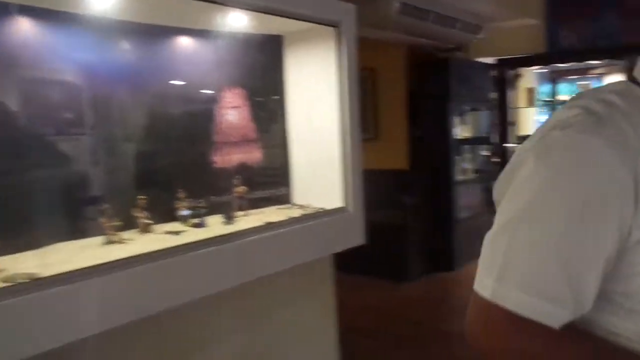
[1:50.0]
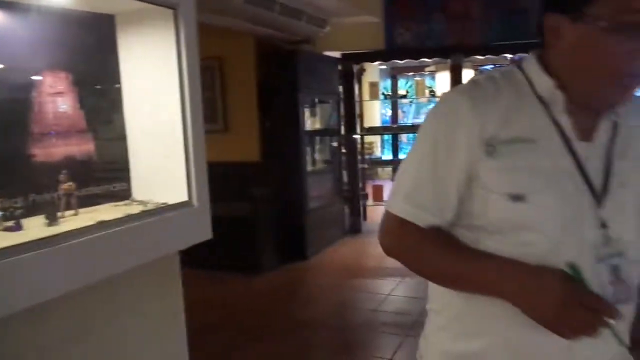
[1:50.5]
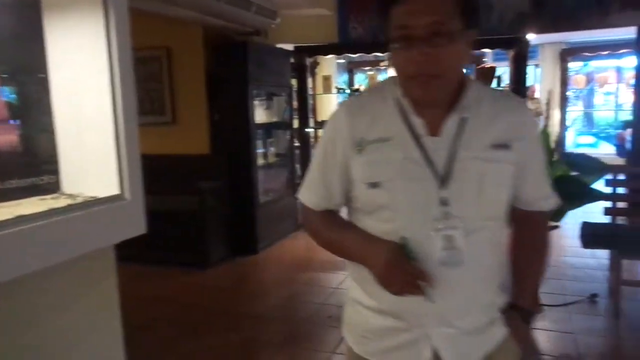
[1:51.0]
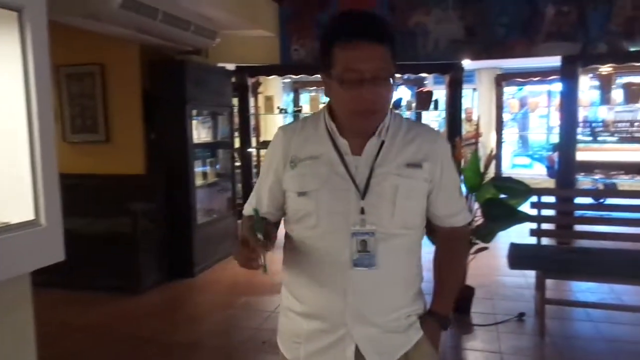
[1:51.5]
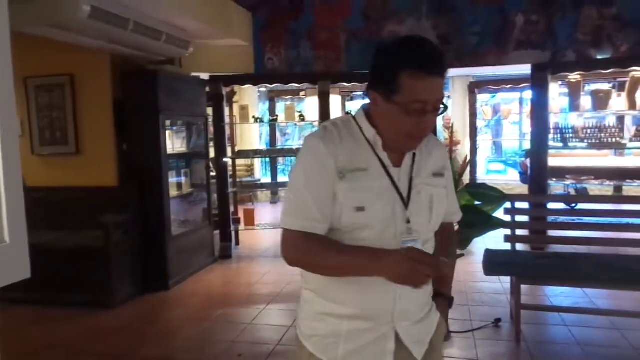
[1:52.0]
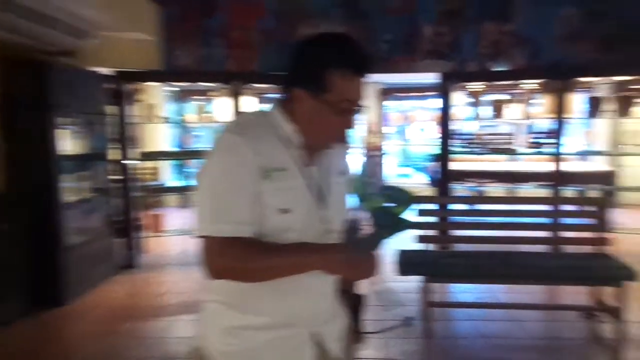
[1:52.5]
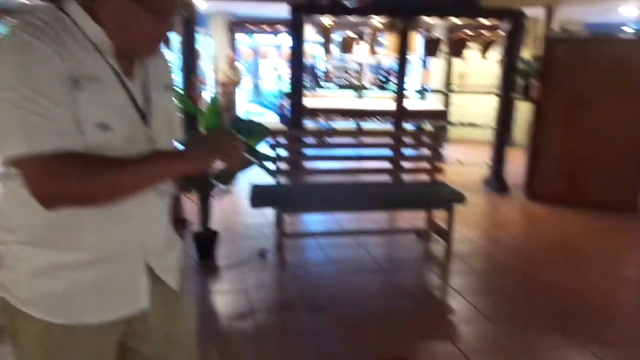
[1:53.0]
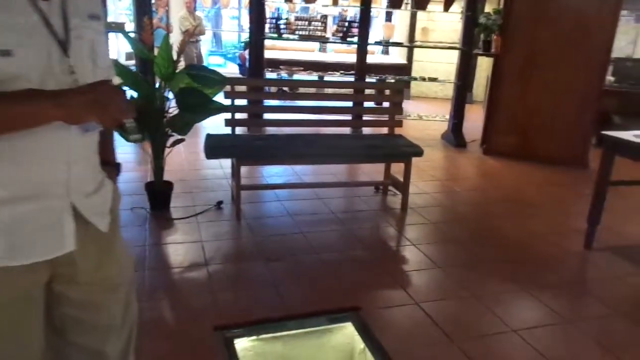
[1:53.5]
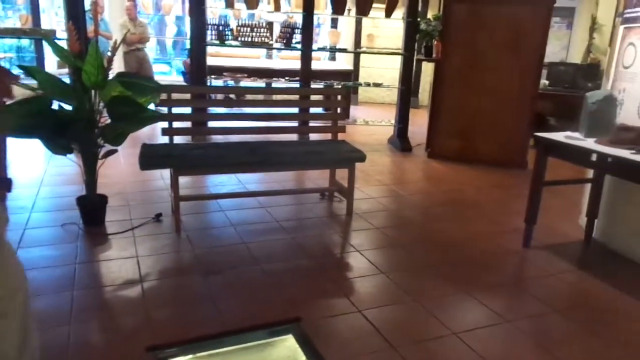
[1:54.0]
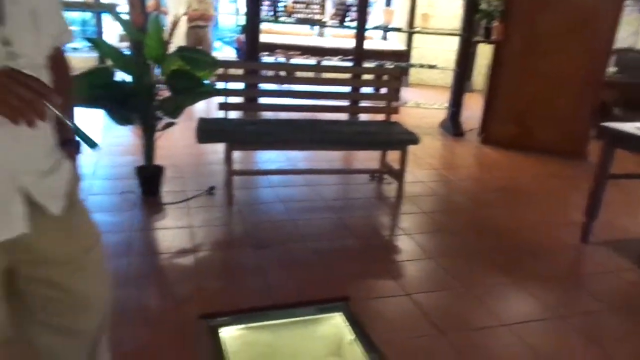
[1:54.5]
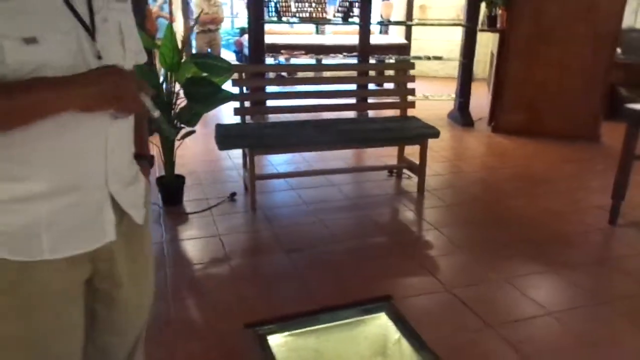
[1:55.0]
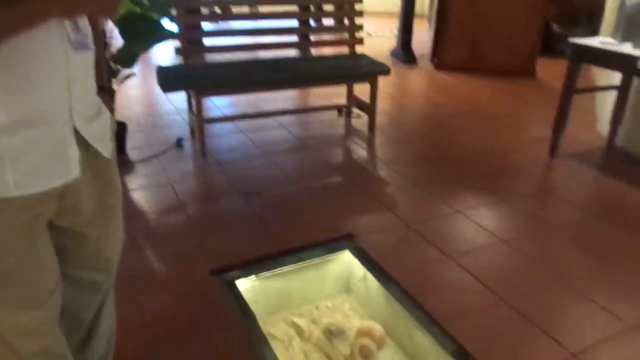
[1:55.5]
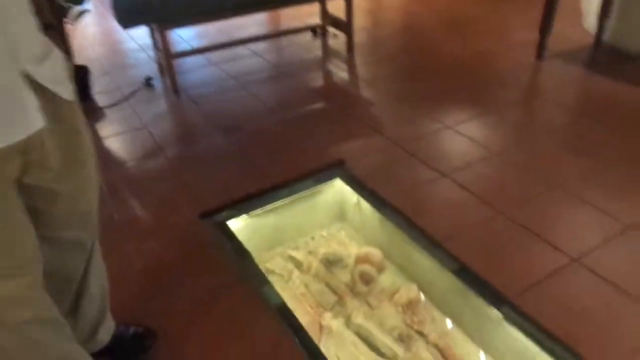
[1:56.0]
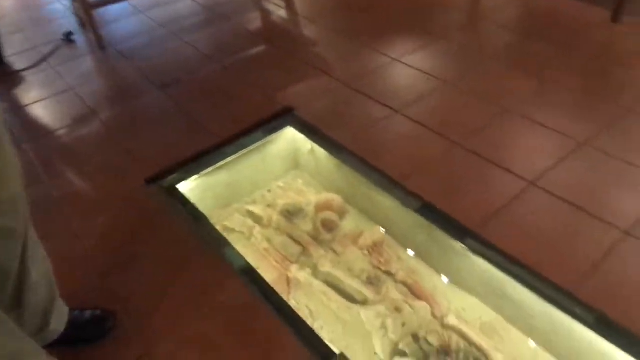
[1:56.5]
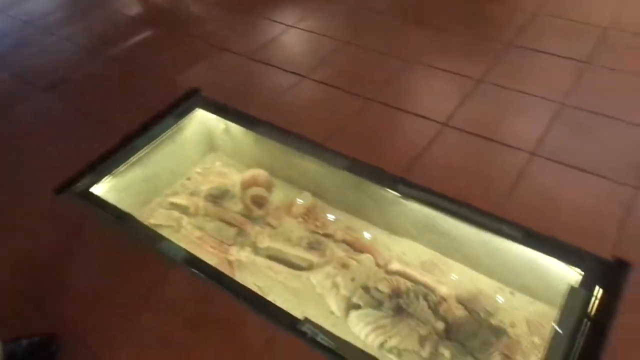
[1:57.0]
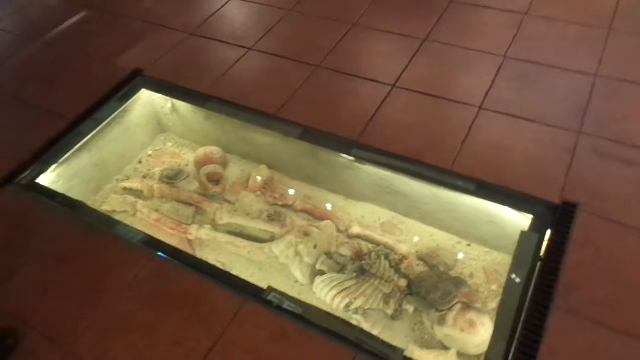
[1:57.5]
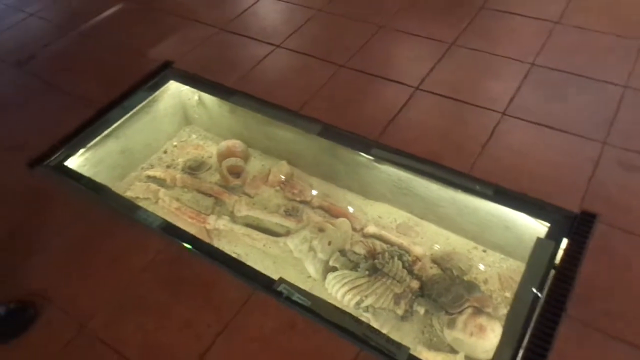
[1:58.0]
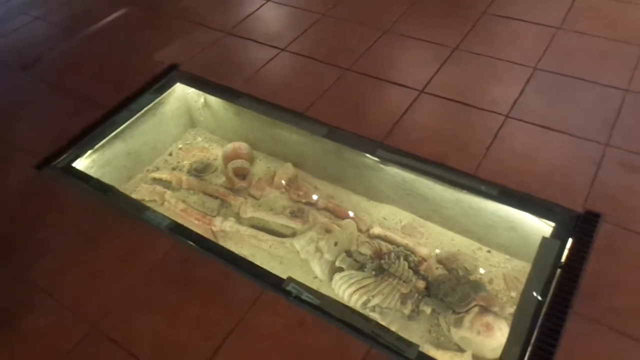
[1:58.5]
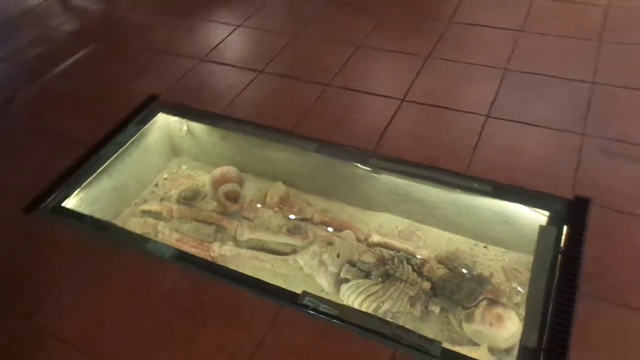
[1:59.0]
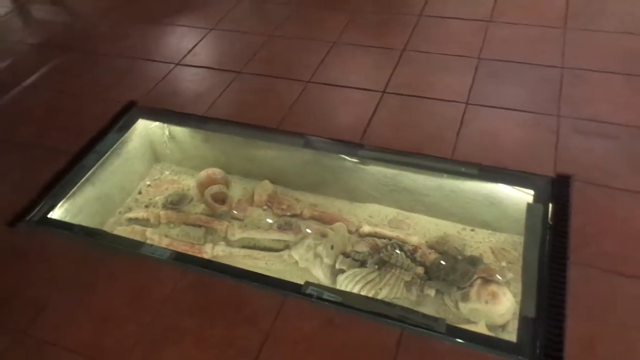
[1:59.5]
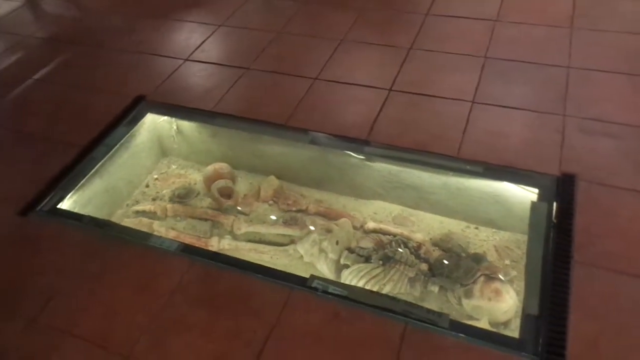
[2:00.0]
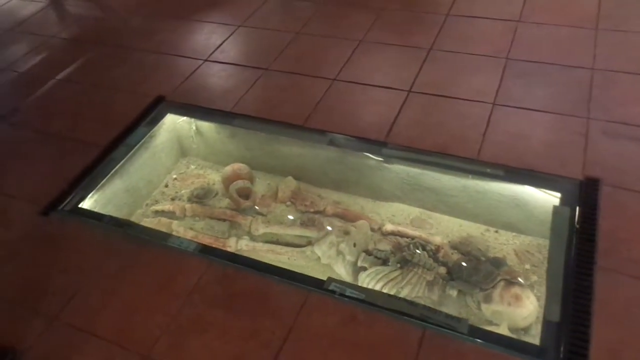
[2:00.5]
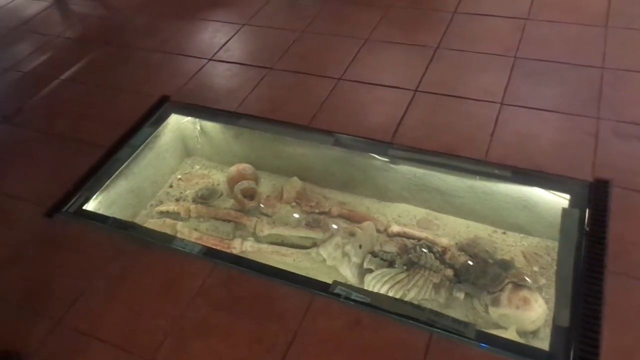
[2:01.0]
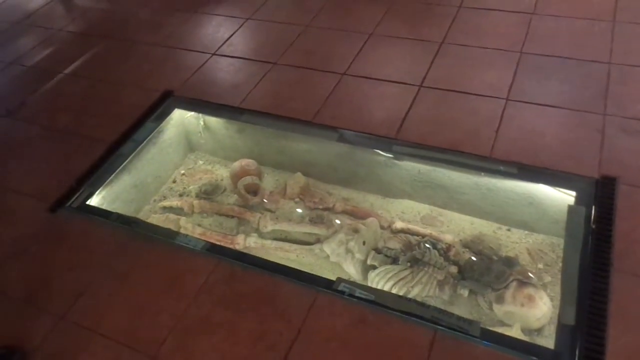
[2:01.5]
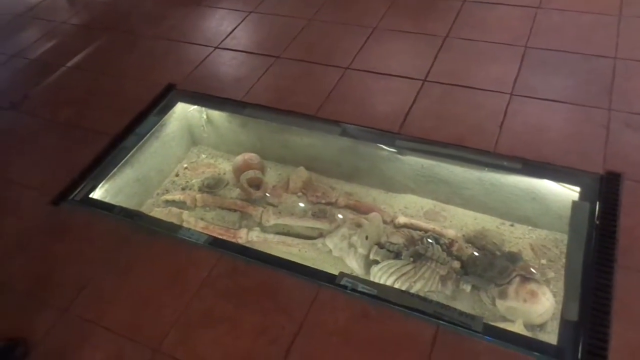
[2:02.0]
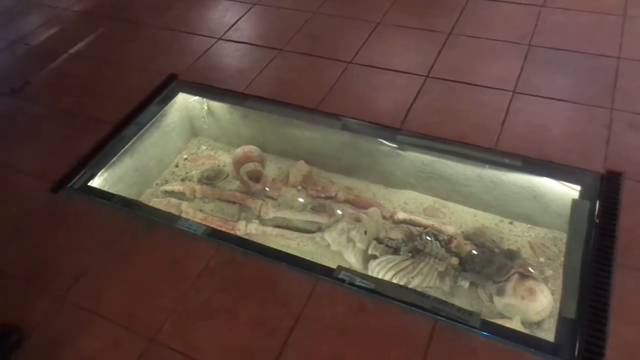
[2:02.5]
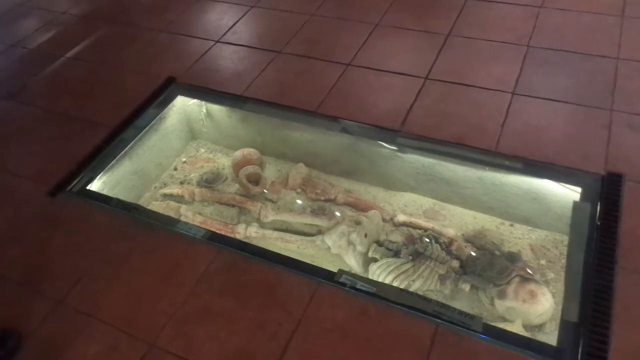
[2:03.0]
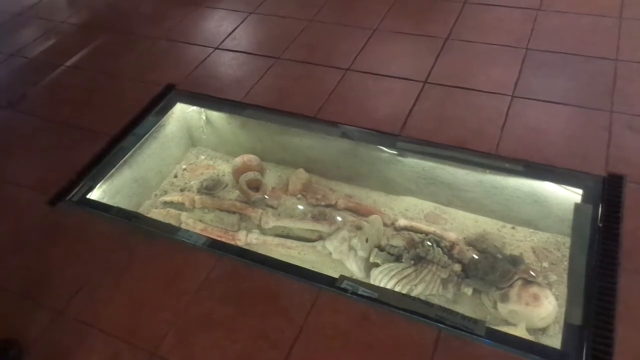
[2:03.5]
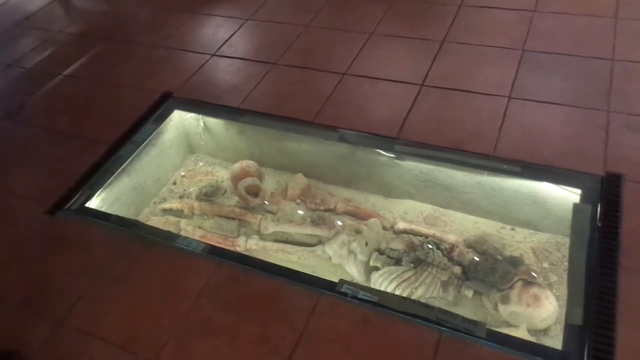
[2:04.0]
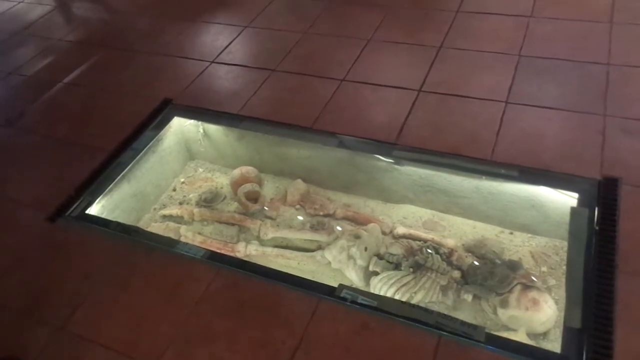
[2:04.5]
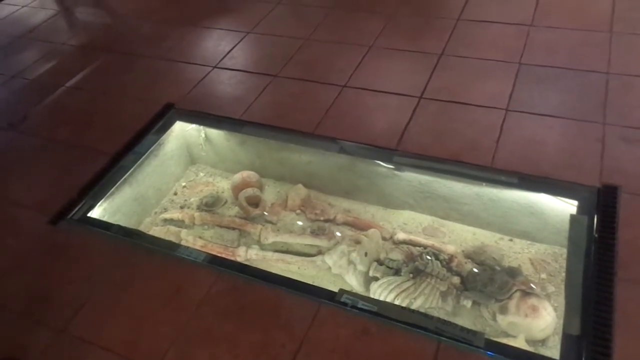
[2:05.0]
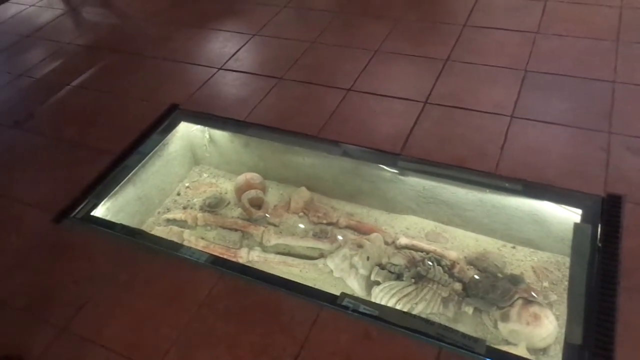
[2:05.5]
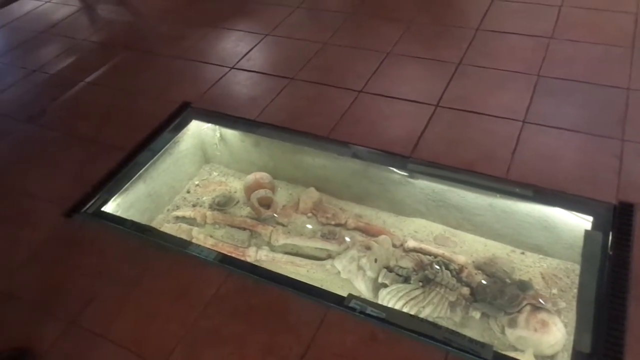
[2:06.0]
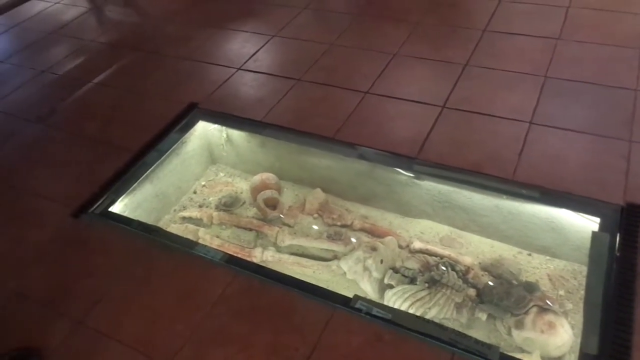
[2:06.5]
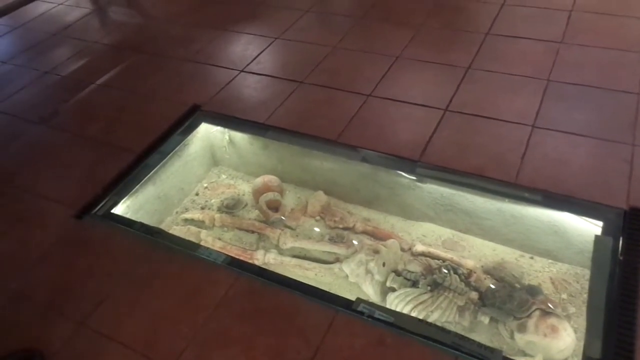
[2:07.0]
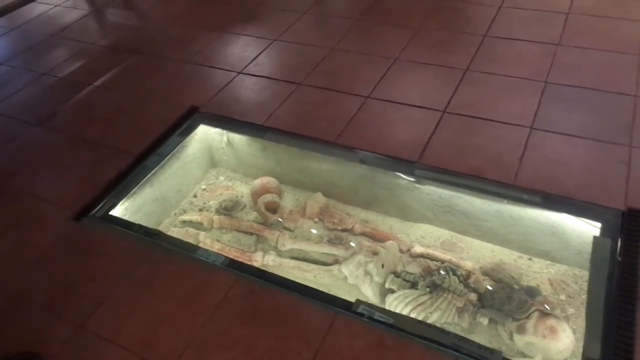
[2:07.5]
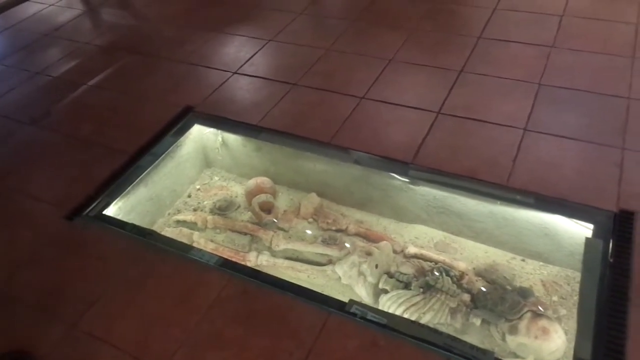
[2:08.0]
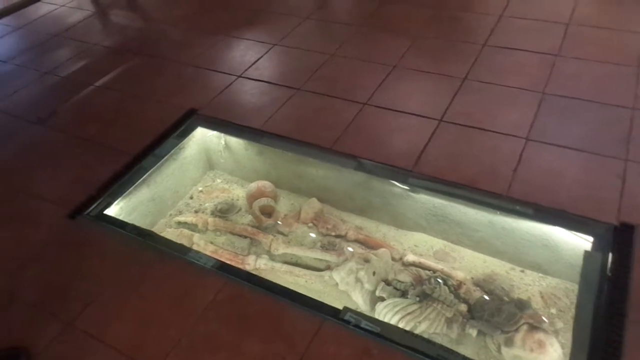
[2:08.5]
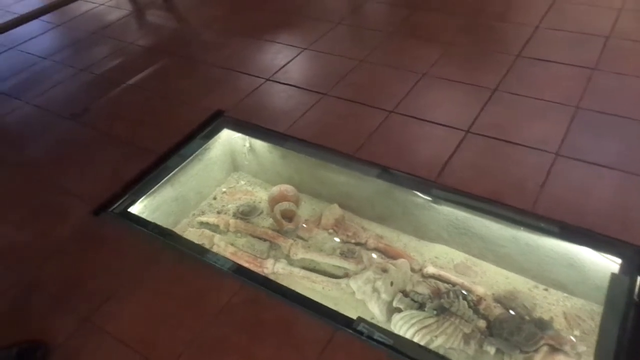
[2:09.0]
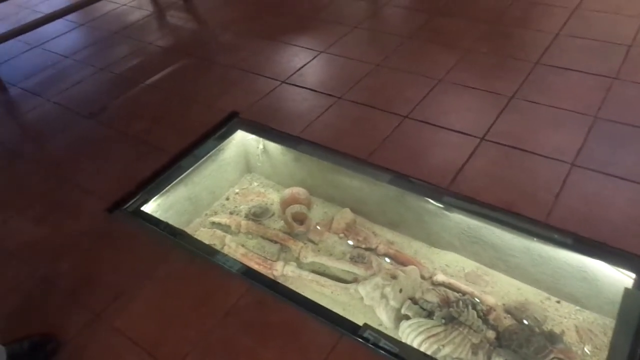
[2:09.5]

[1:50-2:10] The camera focuses on the man in the white shirt and black glasses, who appears to be of Asian, Mexican or Native American descent. He explains something about some chairs or benches. Then what looks like a grave of bones appears: part of a body, possibly an ancient one, under a glass cover set into the floor. He points to it after moving away from the display to his right. It contains a skull and bones; it is unclear whether the whole body is there. Some people are visible in the background outside. The location looks like a museum.